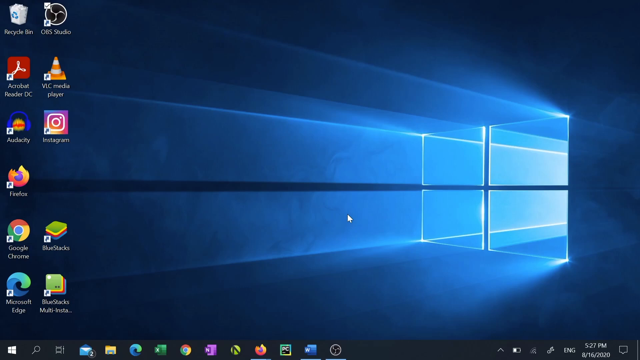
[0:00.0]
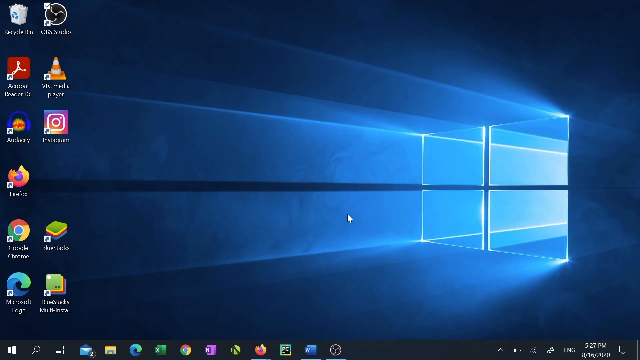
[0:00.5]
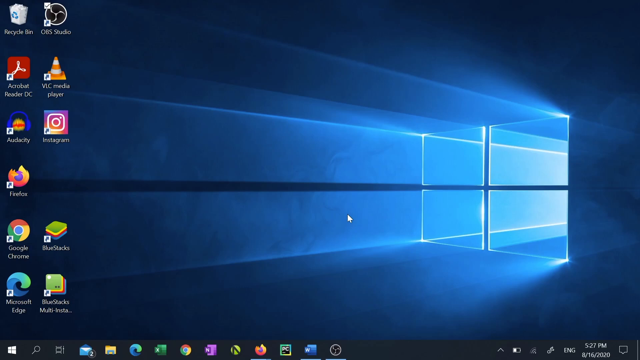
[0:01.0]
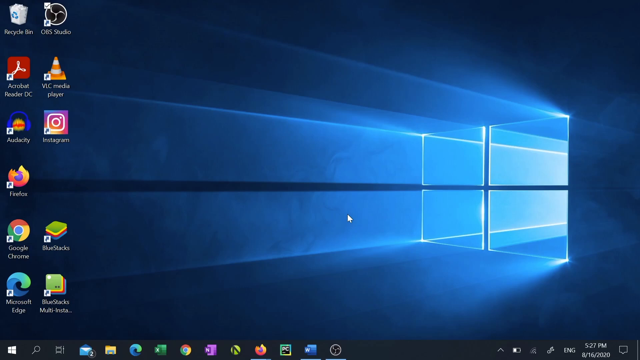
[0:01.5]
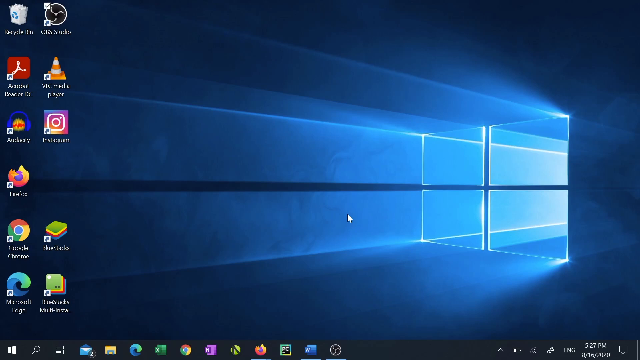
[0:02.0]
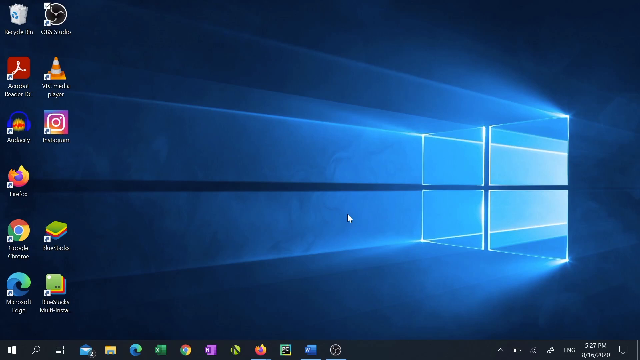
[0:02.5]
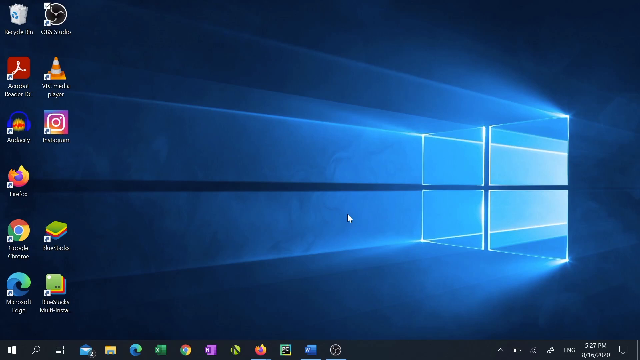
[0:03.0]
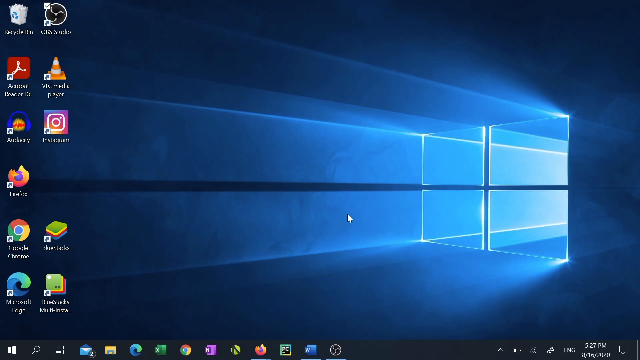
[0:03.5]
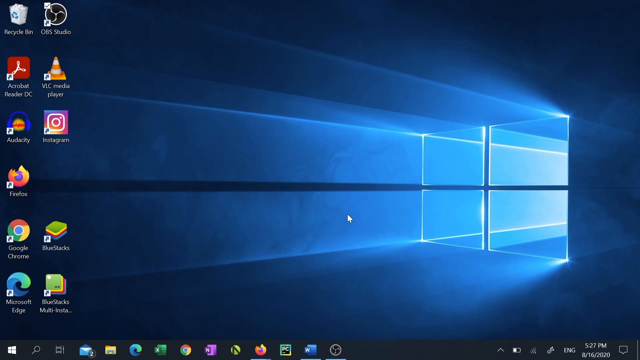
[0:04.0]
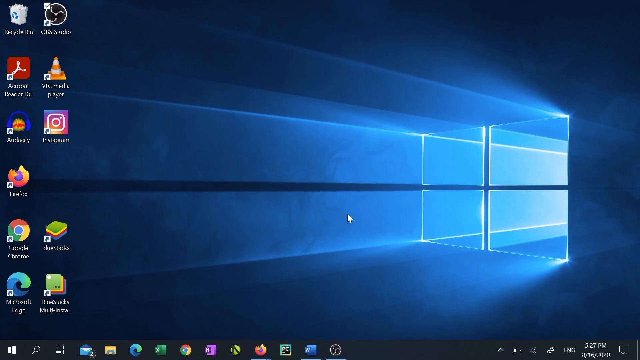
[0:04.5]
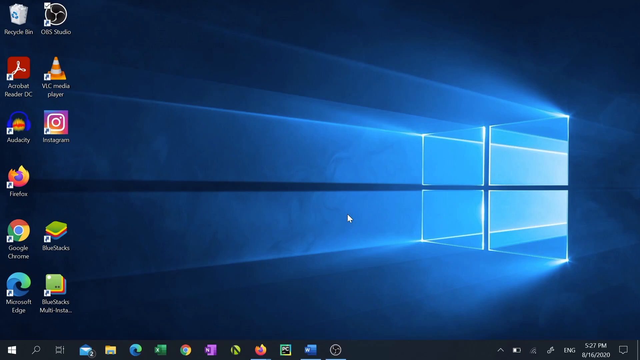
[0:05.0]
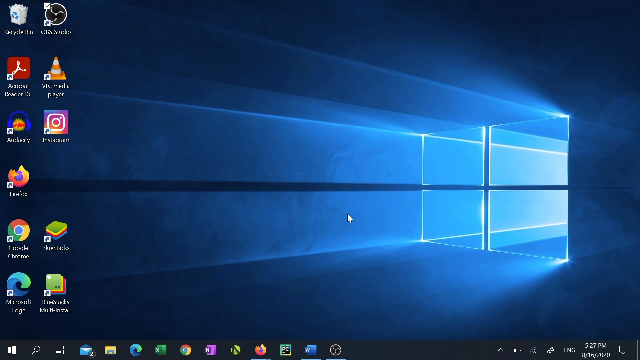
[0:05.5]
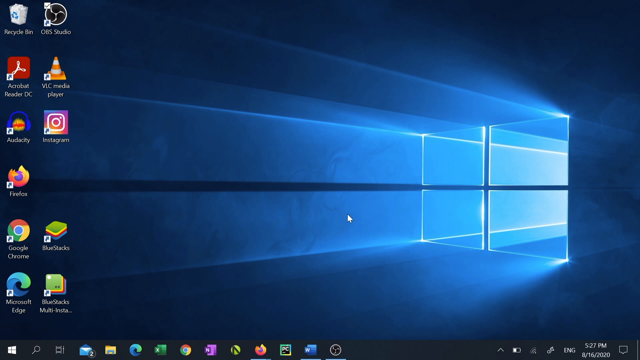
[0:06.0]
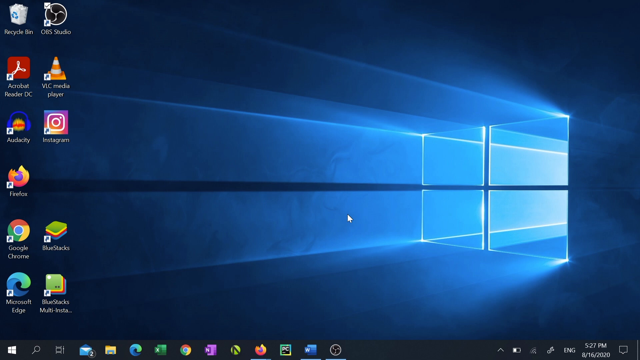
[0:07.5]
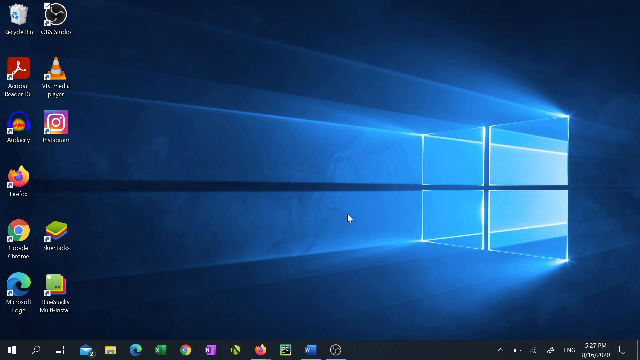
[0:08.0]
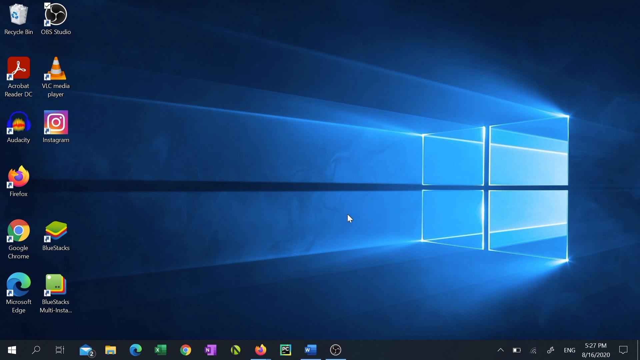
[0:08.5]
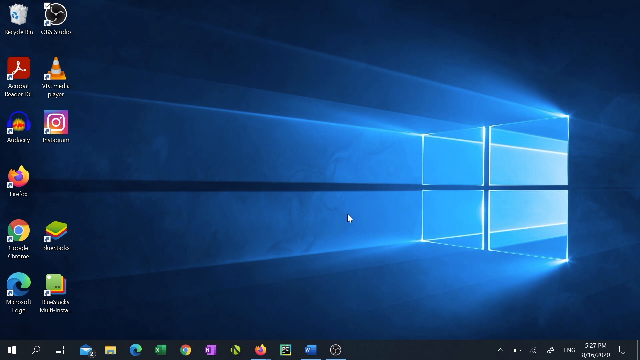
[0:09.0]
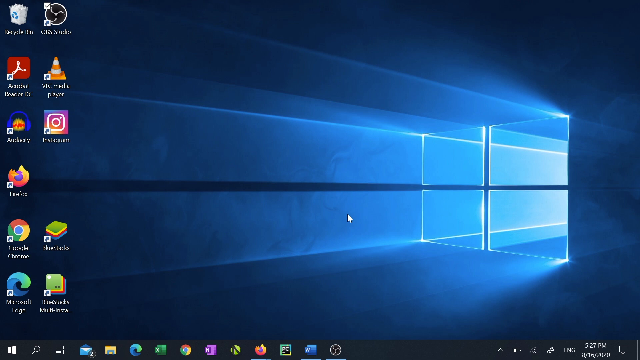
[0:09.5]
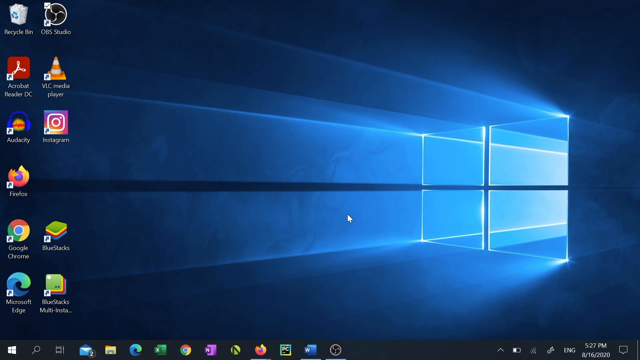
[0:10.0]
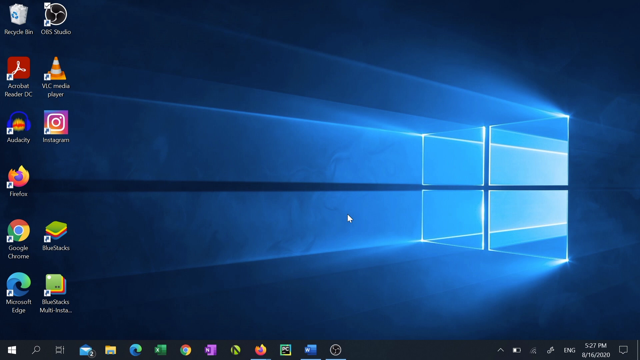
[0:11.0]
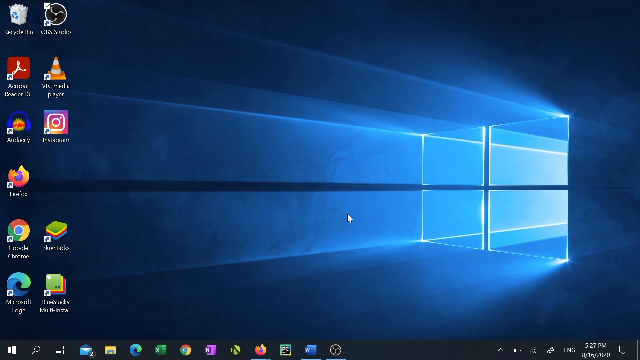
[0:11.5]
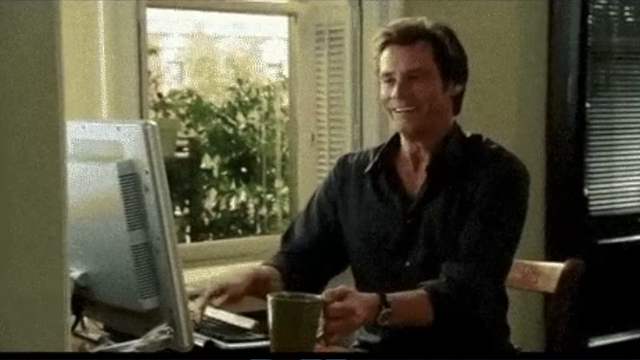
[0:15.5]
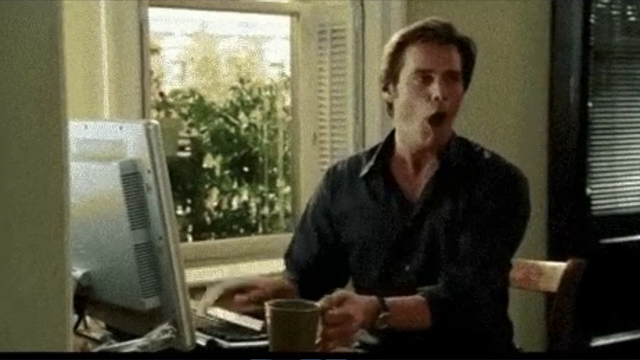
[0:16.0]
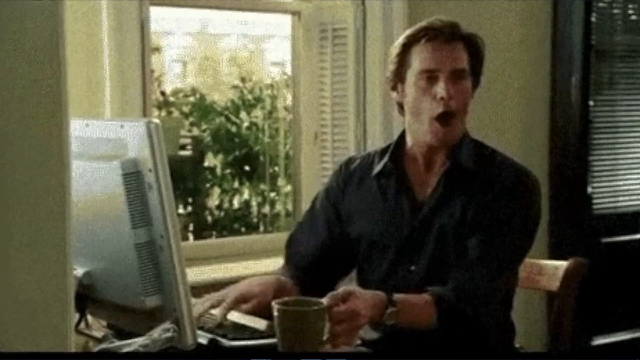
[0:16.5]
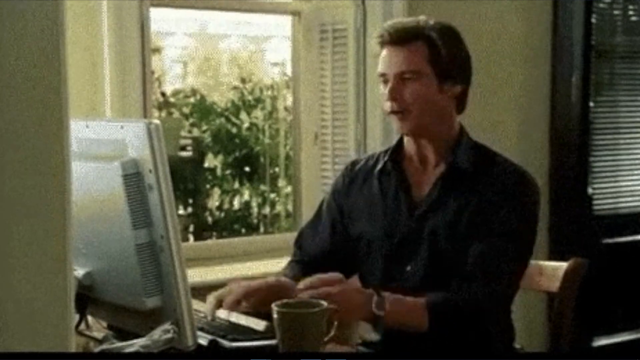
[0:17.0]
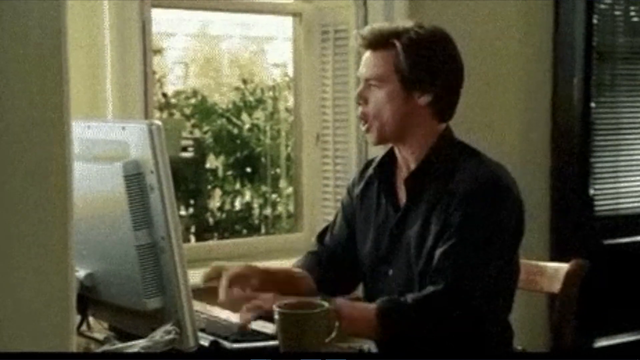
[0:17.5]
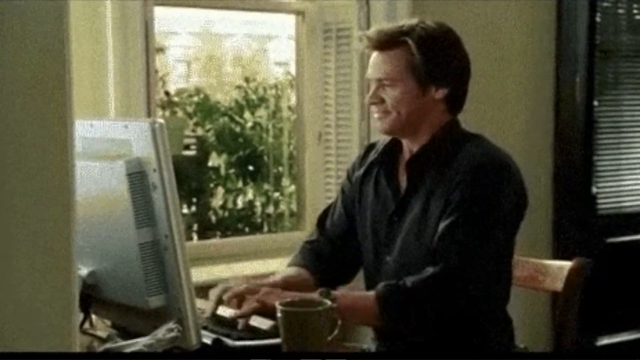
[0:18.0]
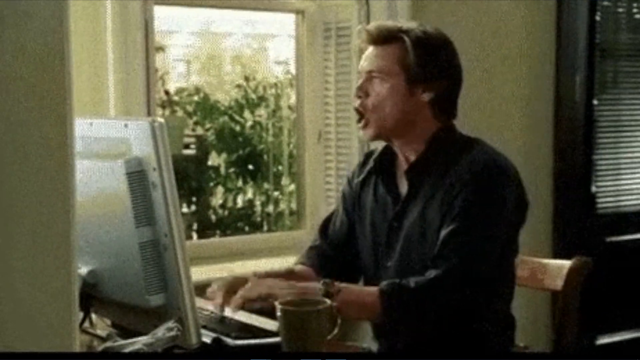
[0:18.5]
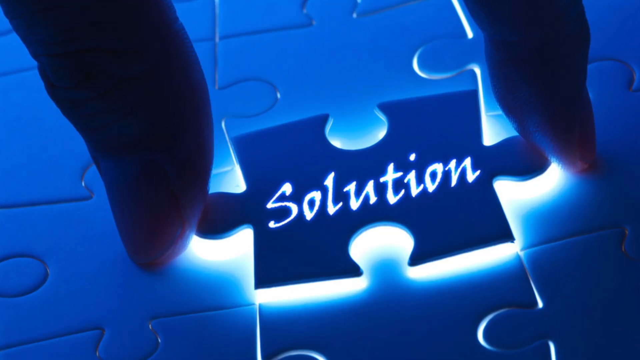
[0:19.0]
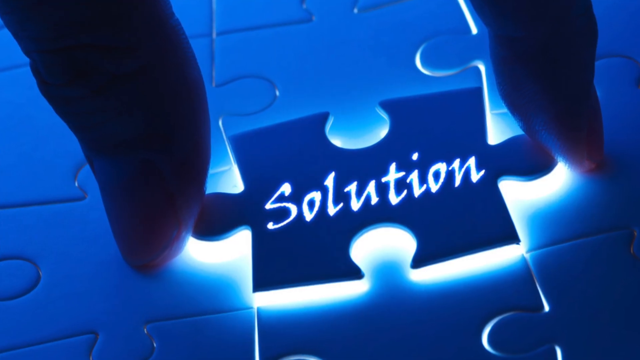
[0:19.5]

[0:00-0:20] A Windows screen, which looks like Windows 10 or 11, shows a few desktop apps: Recycling Bin, OBS Studio, Acrobat Reader DC, VLC Media Player, Instagram, Audacity, Firefox, Google Chrome, Microsoft, BlueStacks, and another BlueStacks-type app. The background is a dark screen with an illuminated window on the right side, made of four window panes, with some light shining through. A mouse cursor is on the screen at the bottom, where there are many pinned apps, including an envelope with a number two, a Windows Explorer app, another Microsoft app and a Google Chrome app. Suddenly the screen changes to Jim Carrey, apparently from the movie Bruce Almighty, at a computer holding a cup of coffee. He types very quickly with his right hand, kind of yawns, smiles, and does a little kind of scream while looking very happy. The screen then changes to a pair of fingers, which look like a thumb and a pointer finger, holding a puzzle piece that says "solution", with the piece illuminated underneath.